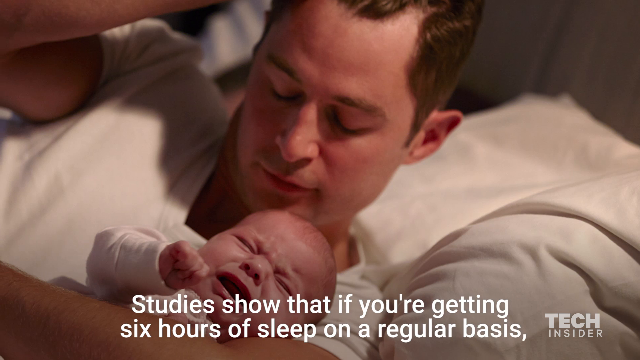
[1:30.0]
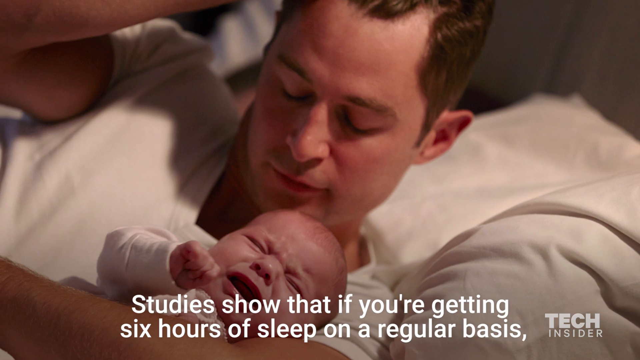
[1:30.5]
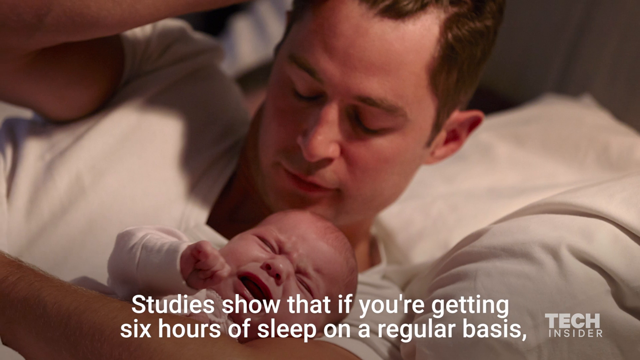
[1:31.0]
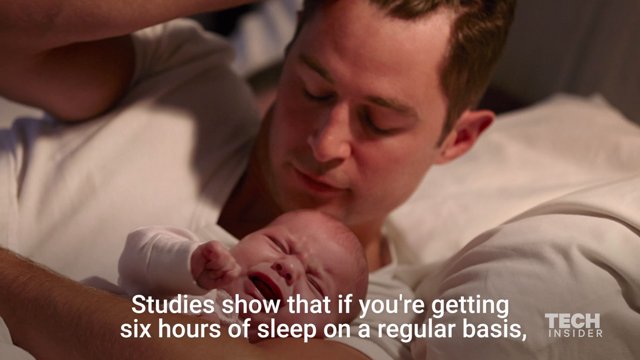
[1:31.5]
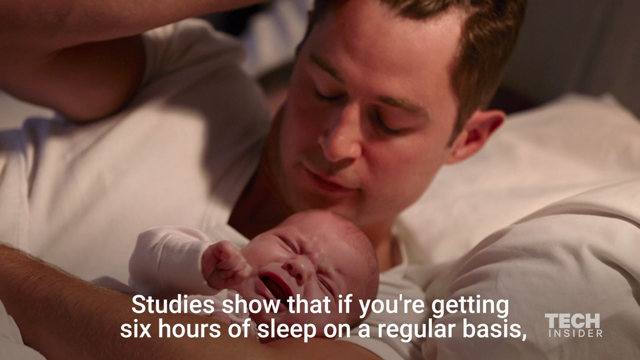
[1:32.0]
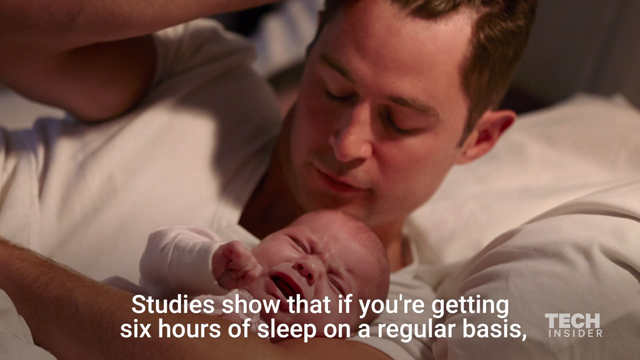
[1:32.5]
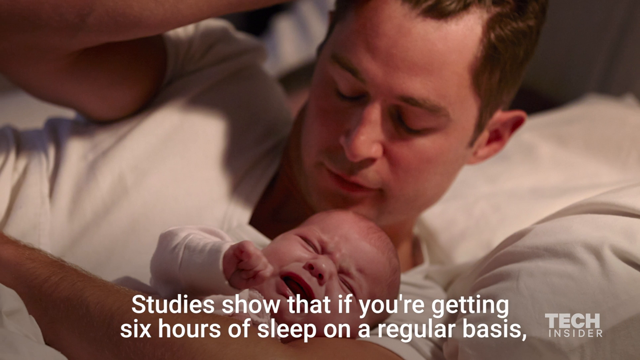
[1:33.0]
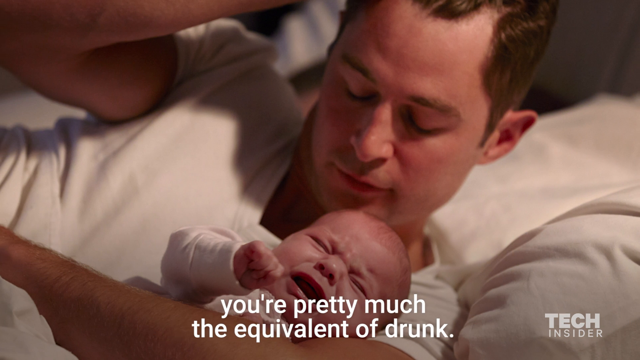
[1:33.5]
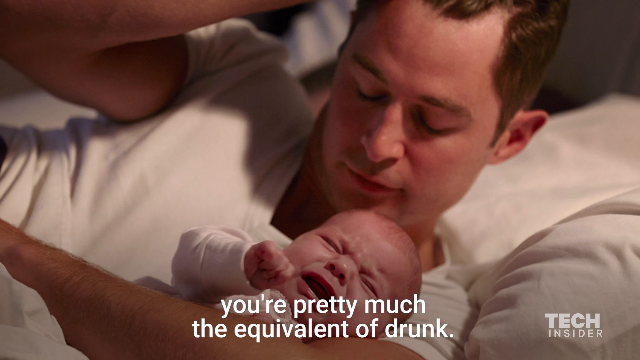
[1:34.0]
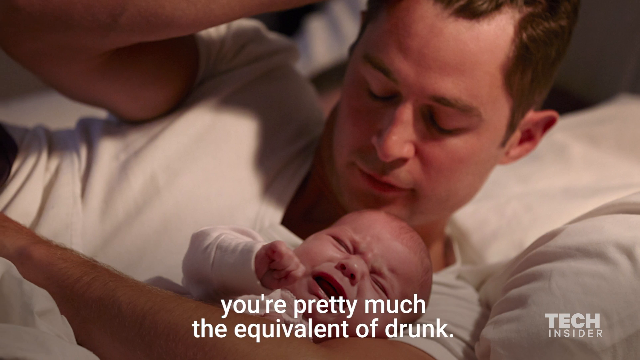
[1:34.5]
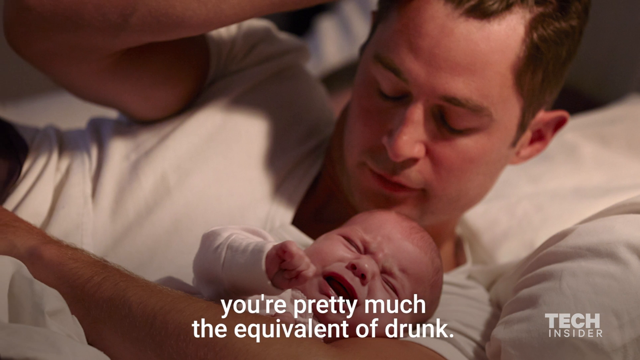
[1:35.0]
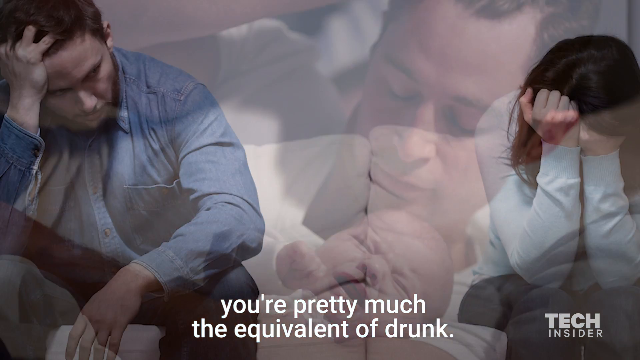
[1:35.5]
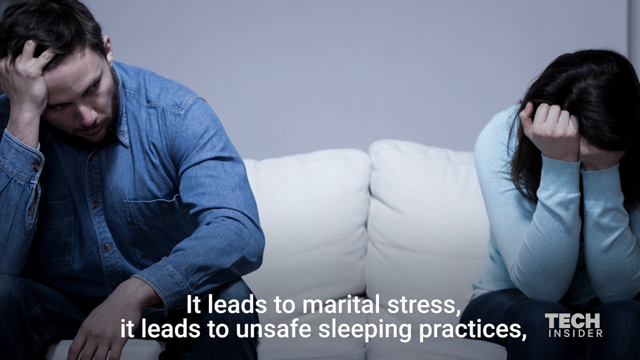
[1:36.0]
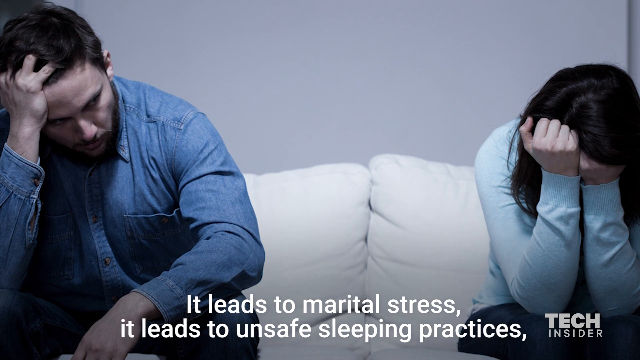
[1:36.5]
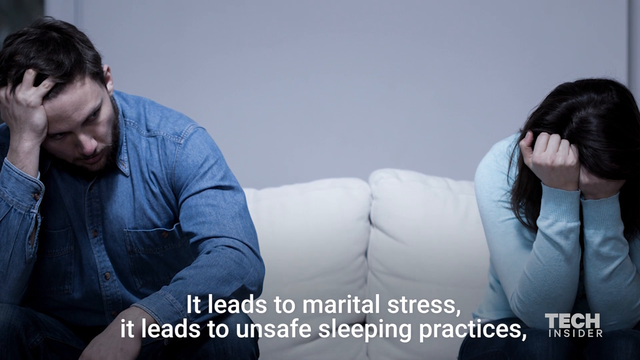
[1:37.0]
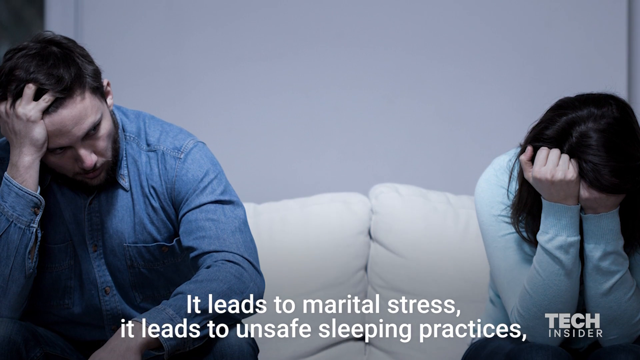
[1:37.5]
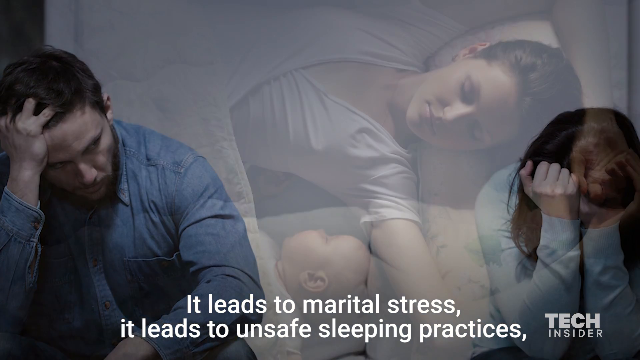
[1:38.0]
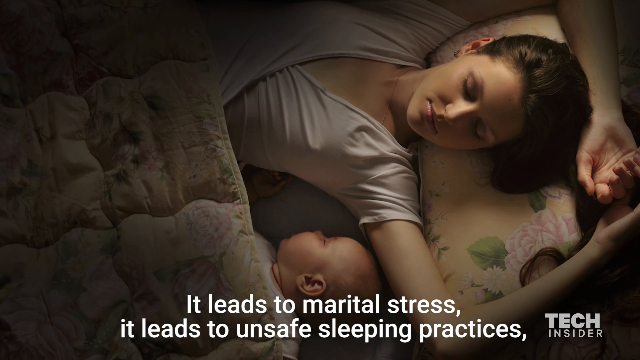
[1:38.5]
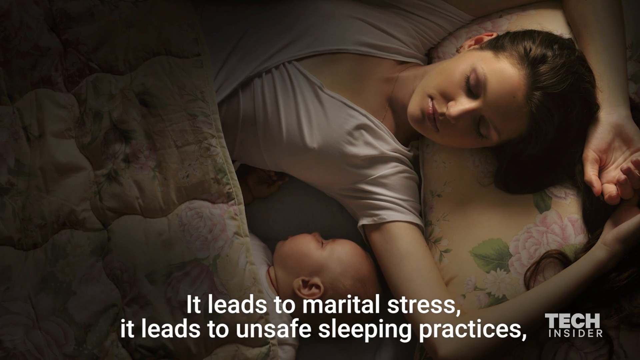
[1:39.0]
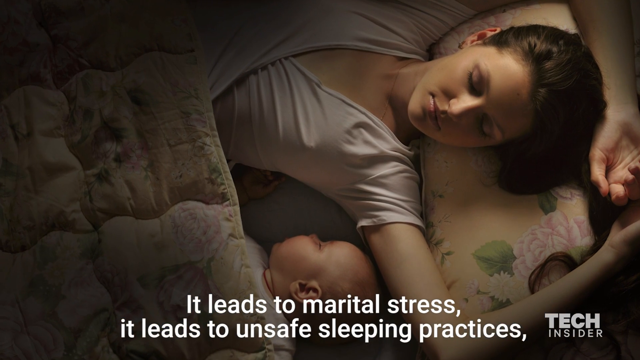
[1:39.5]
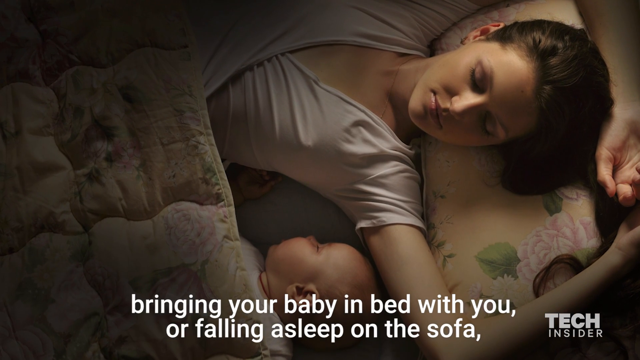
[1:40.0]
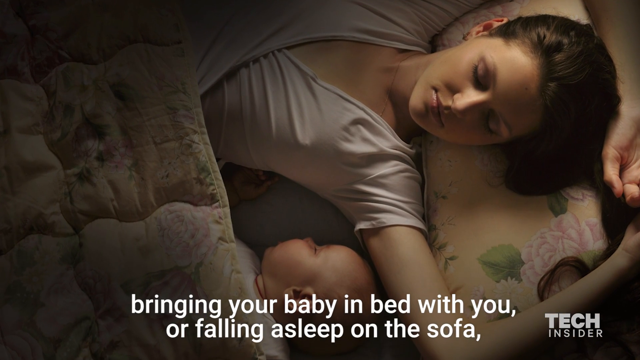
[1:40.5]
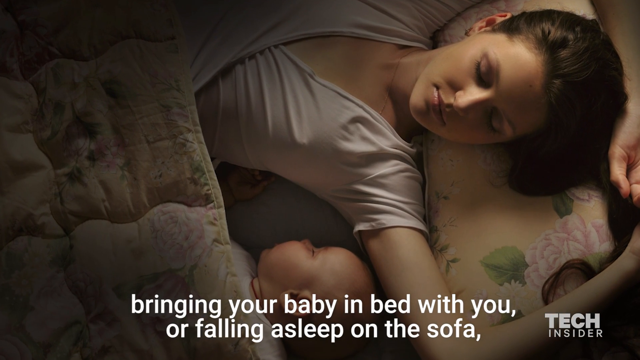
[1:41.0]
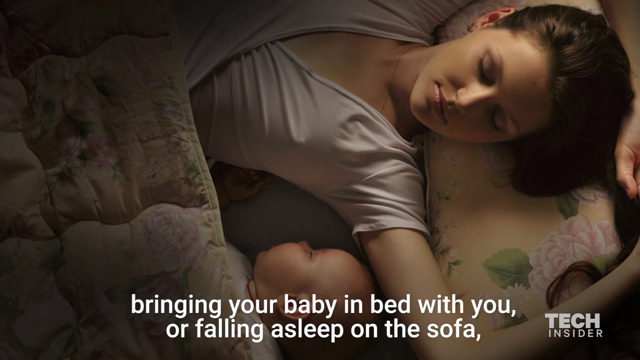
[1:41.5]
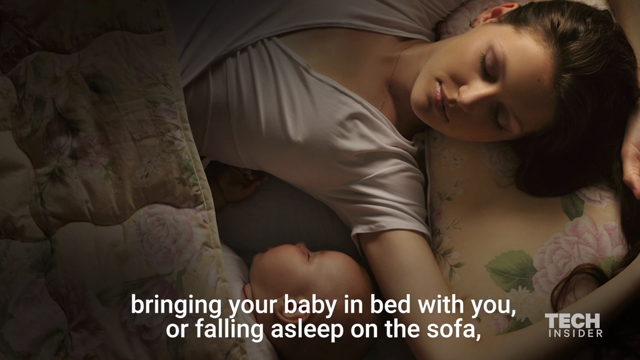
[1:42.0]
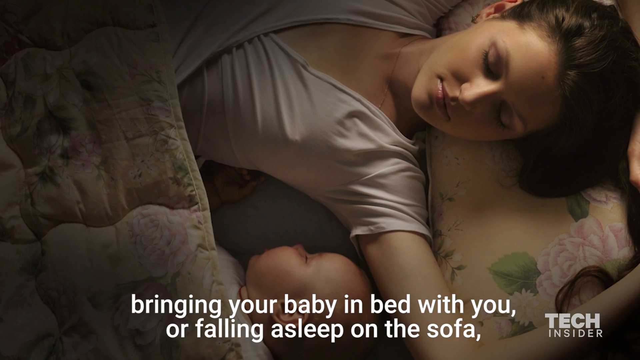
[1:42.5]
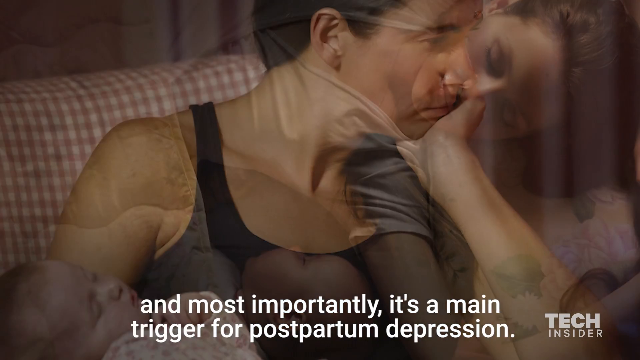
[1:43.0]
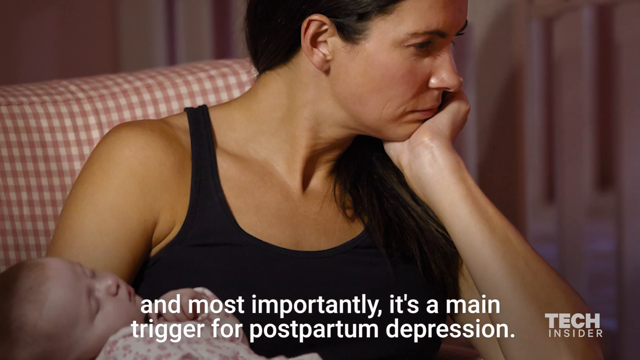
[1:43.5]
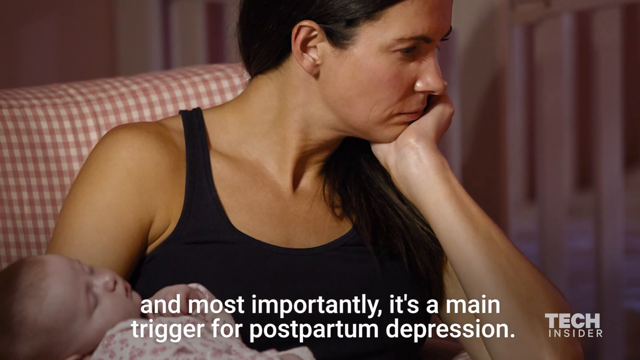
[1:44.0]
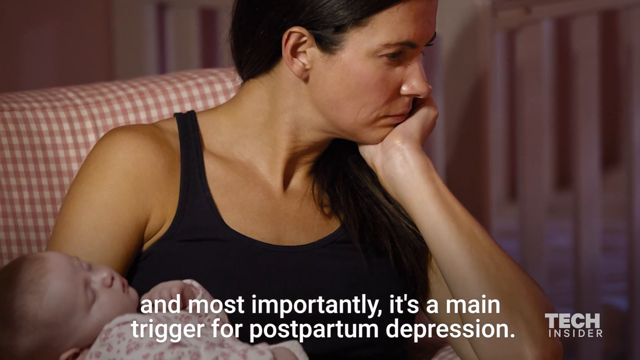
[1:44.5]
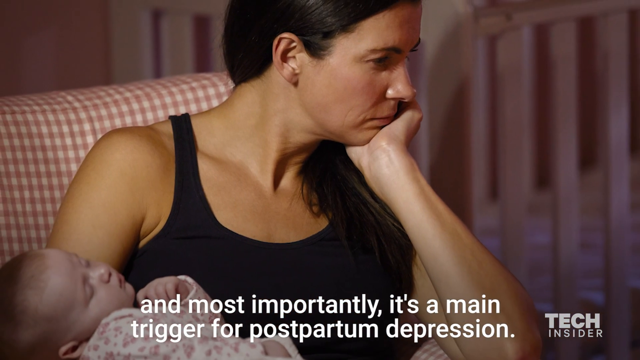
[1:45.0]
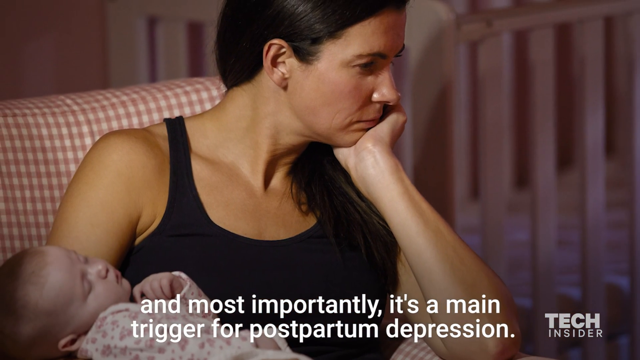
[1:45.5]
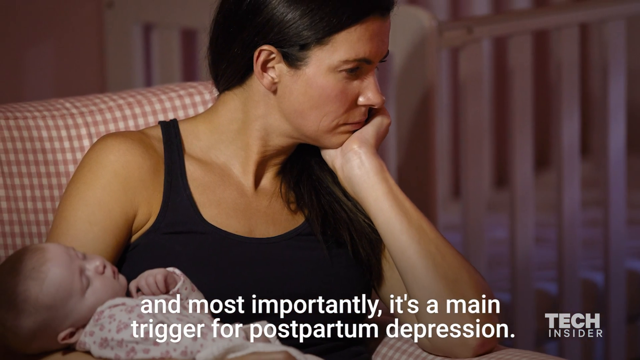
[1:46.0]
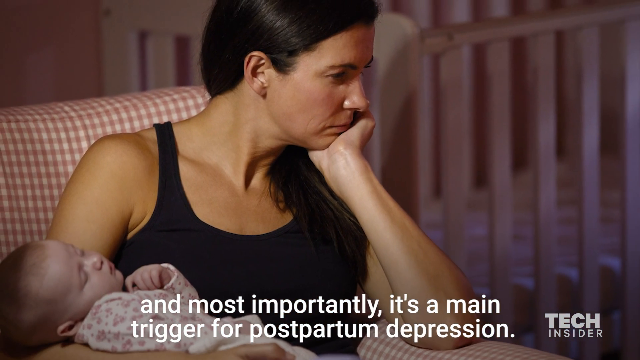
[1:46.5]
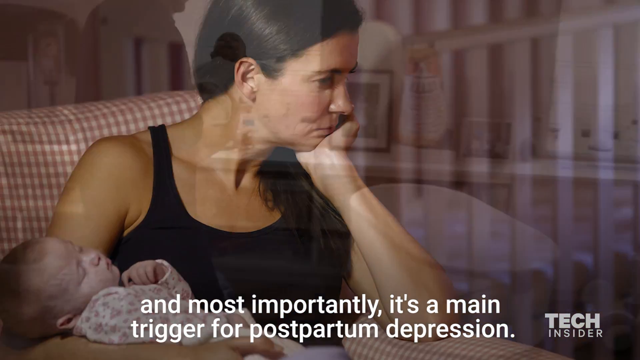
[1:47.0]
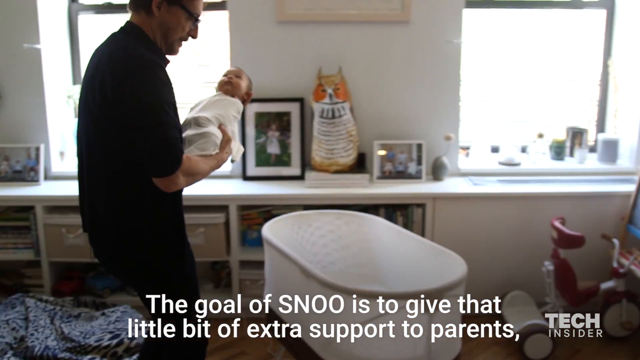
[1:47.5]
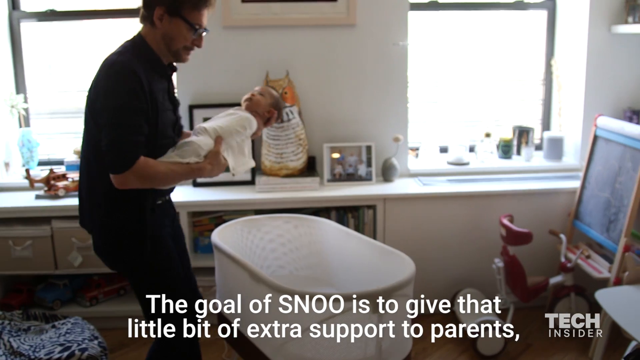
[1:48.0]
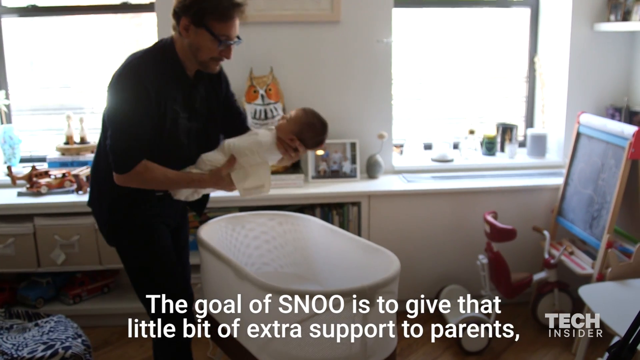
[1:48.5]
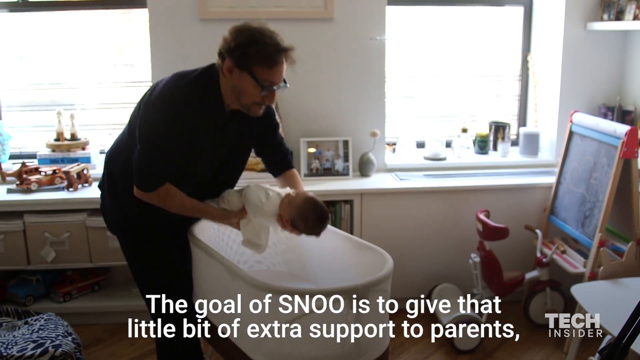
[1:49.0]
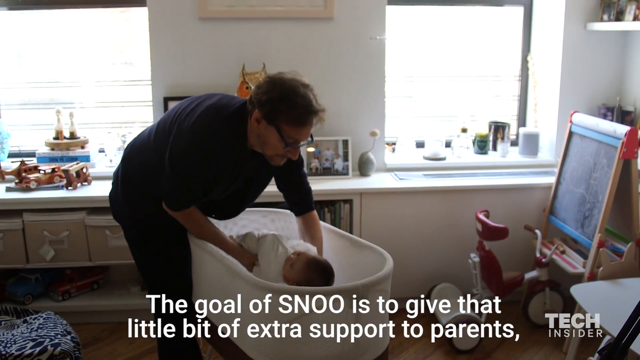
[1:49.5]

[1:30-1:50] Several women of Caucasian descent are shown; some appear happy as they sleep next to a baby, while others appear very distressed because the baby is somewhat crying. The camera is far away and slowly zooms in toward the people in the various scenes. A man puts a baby inside the electronic crib. At the very end of the scene, the camera pans to a man and a woman who look very distraught and distressed, sitting on a couch inside a house with dark lighting in the background.